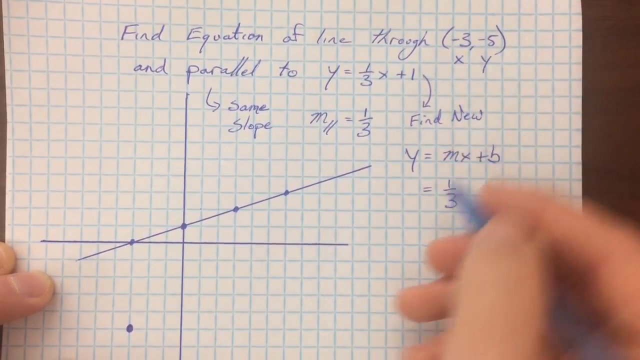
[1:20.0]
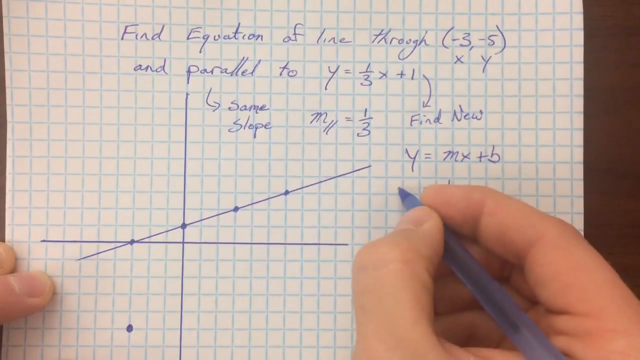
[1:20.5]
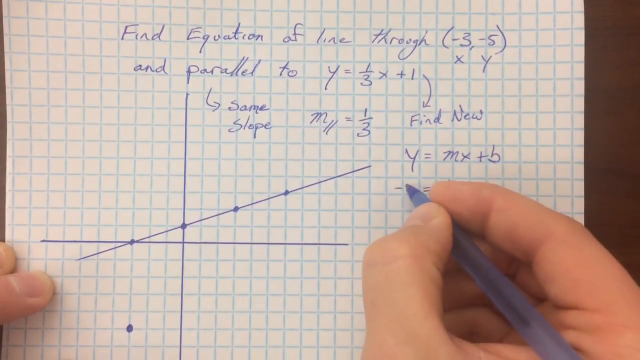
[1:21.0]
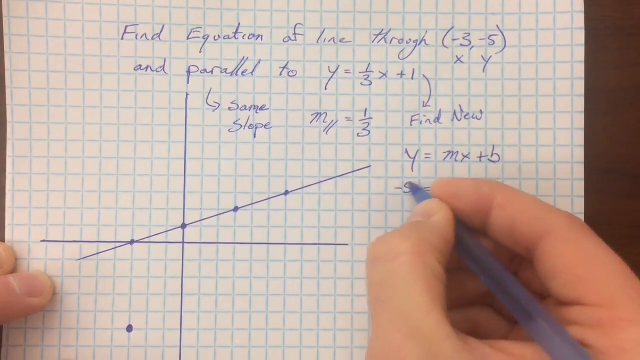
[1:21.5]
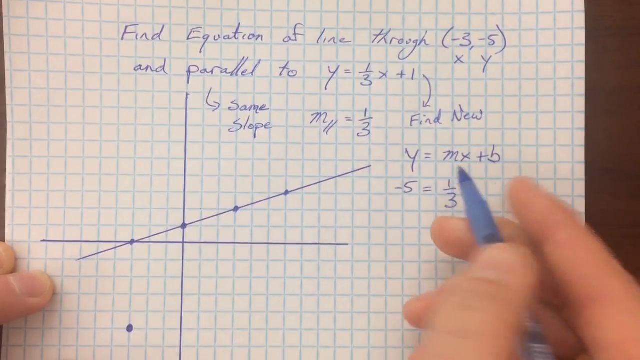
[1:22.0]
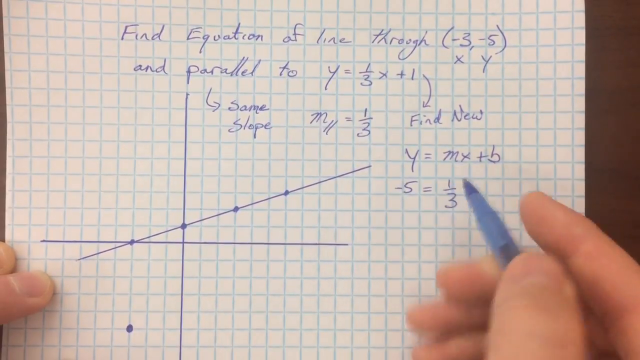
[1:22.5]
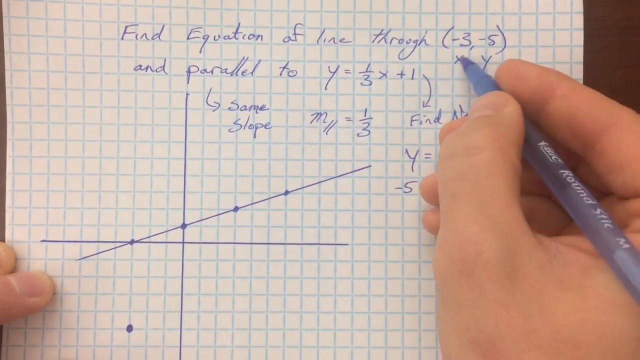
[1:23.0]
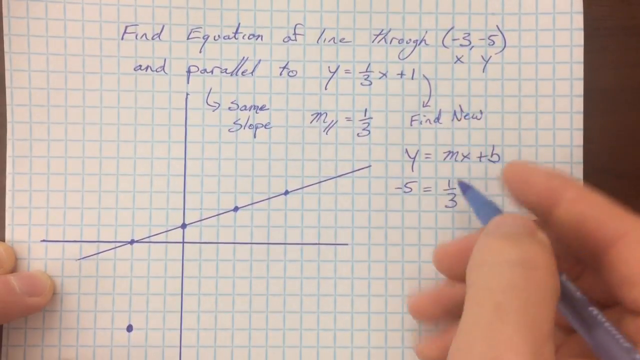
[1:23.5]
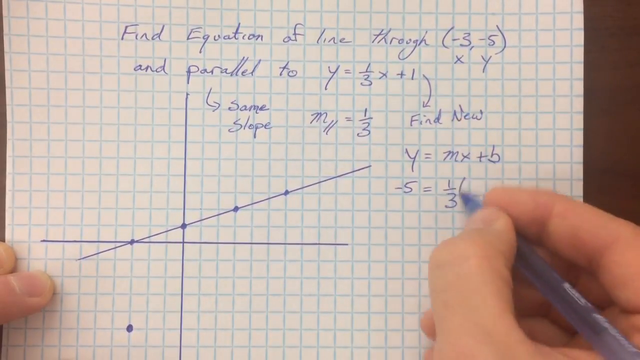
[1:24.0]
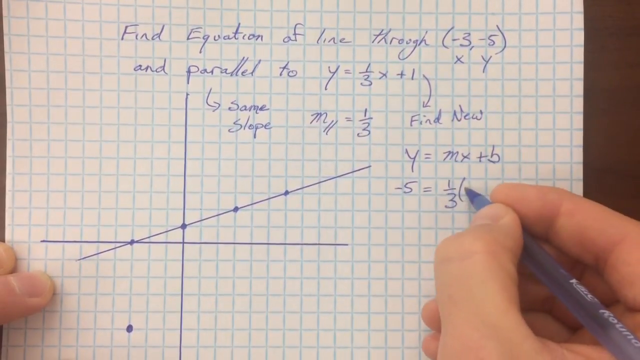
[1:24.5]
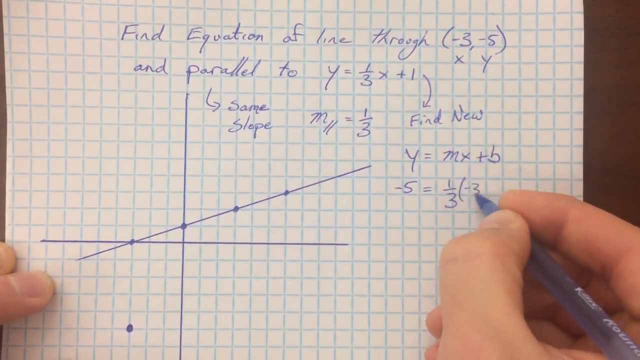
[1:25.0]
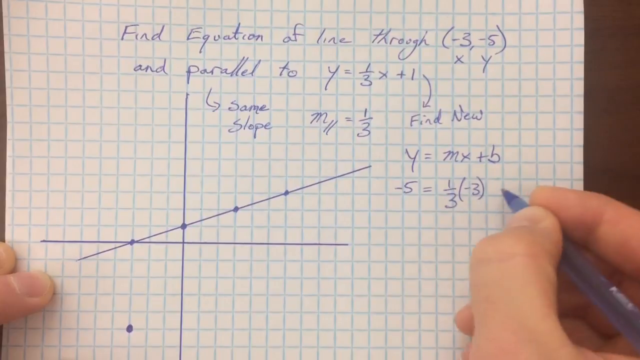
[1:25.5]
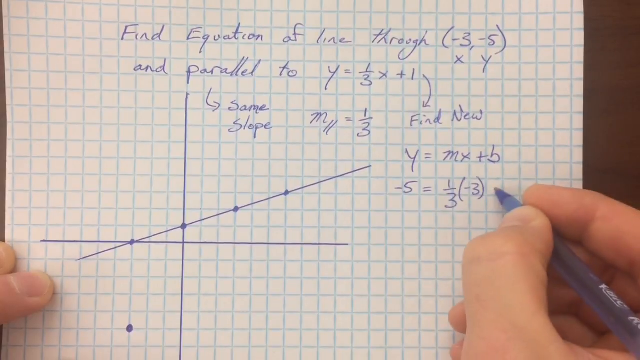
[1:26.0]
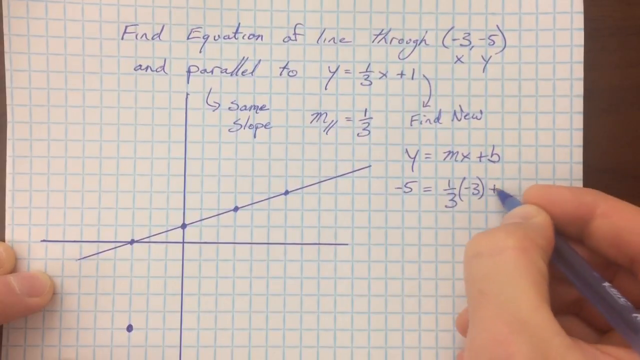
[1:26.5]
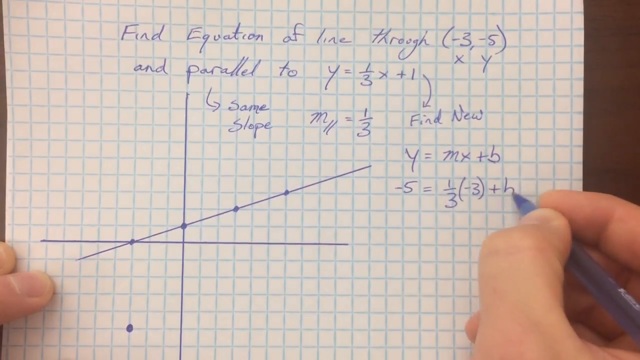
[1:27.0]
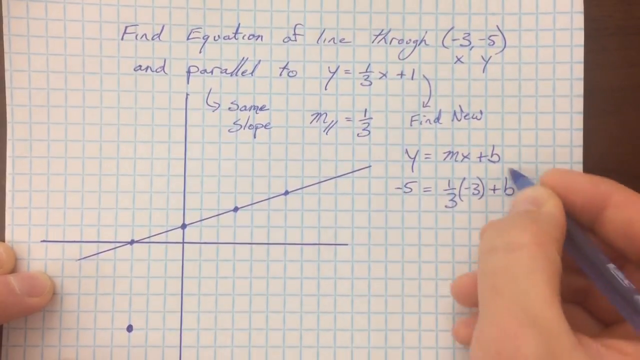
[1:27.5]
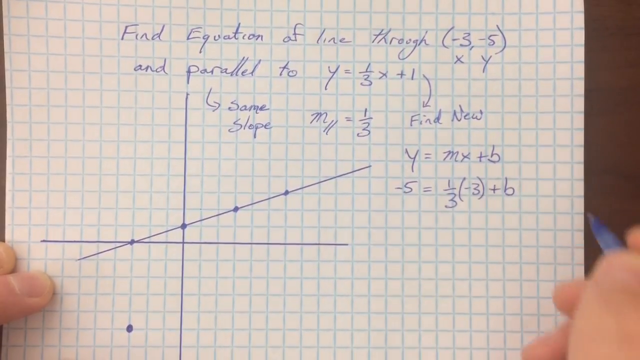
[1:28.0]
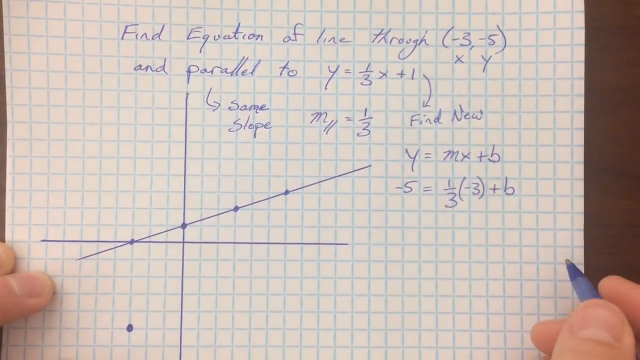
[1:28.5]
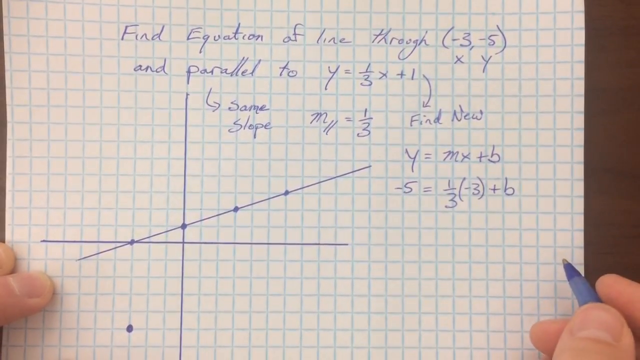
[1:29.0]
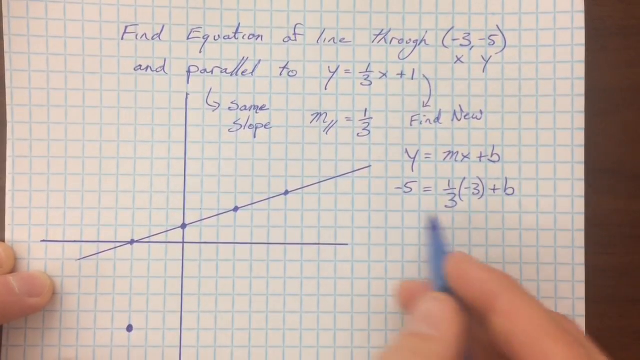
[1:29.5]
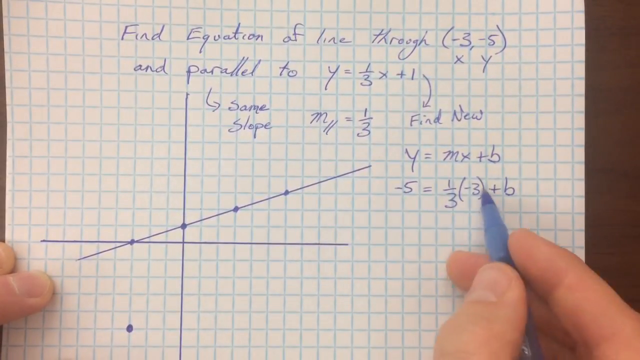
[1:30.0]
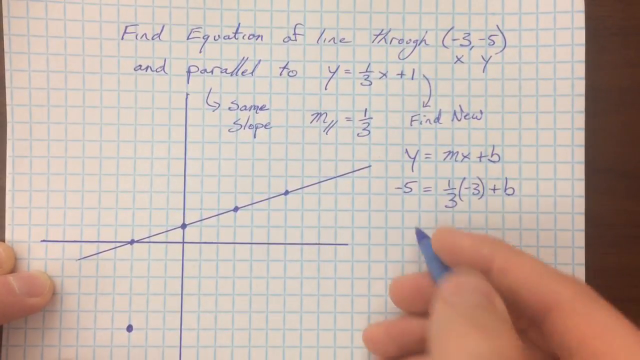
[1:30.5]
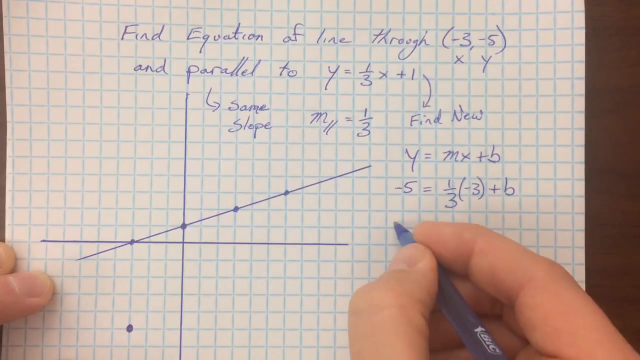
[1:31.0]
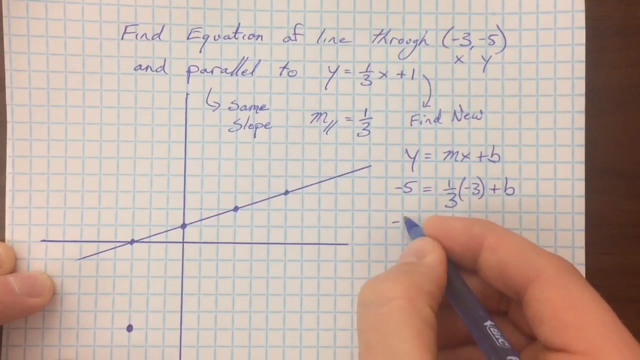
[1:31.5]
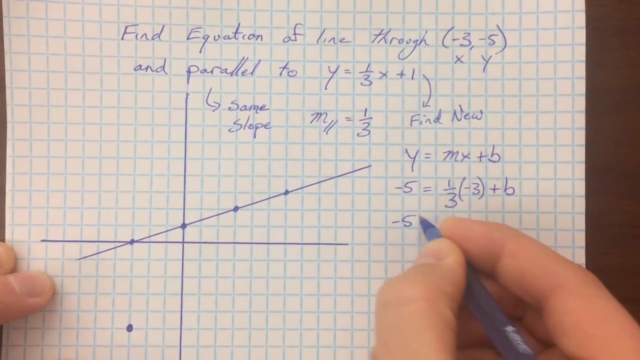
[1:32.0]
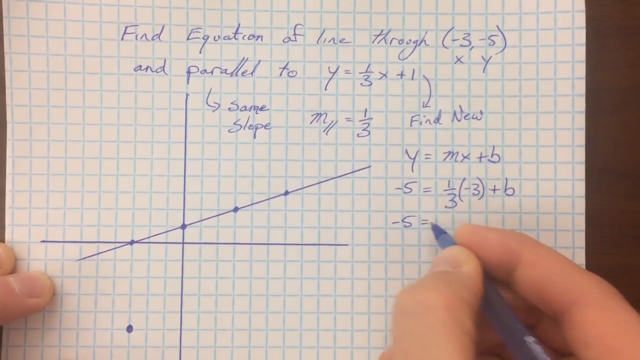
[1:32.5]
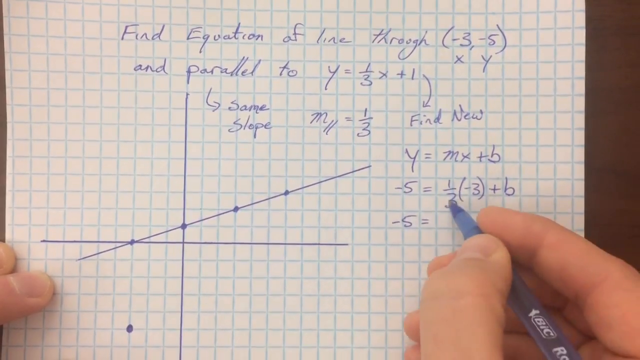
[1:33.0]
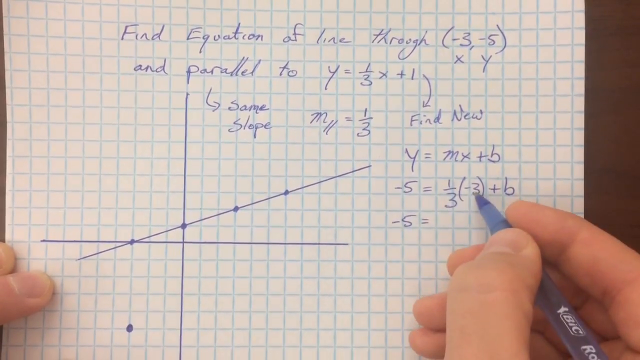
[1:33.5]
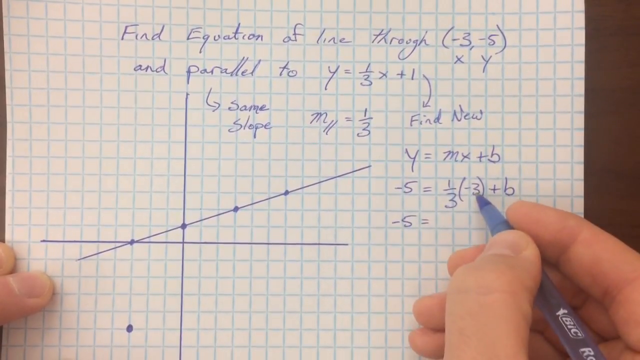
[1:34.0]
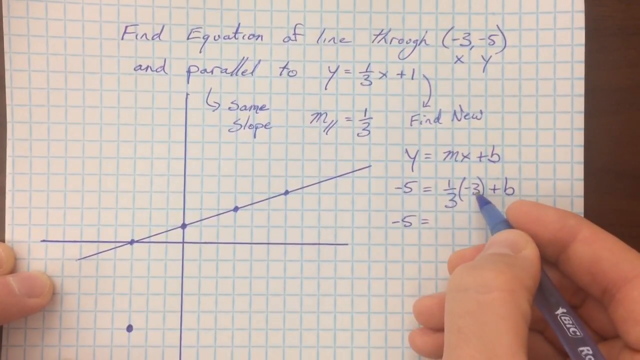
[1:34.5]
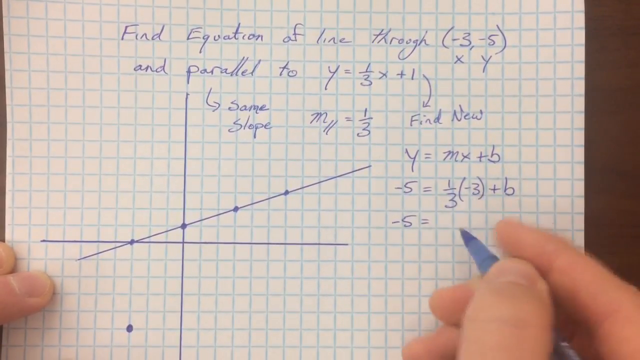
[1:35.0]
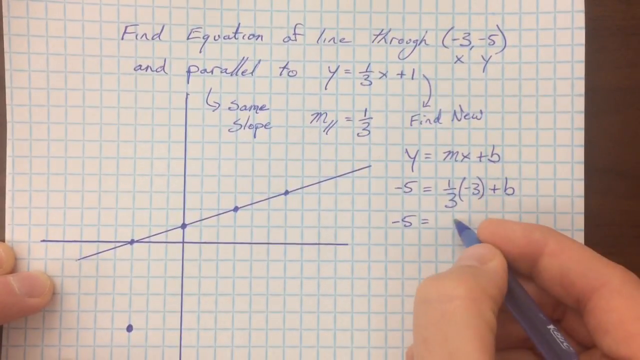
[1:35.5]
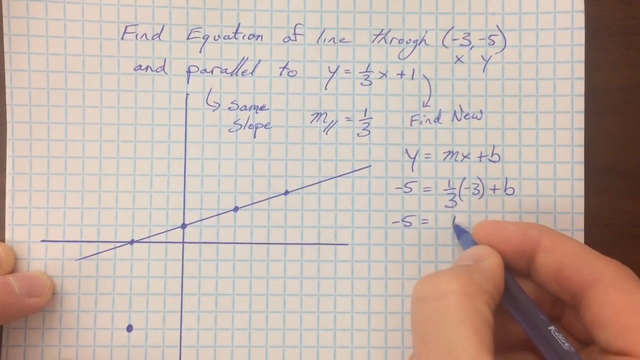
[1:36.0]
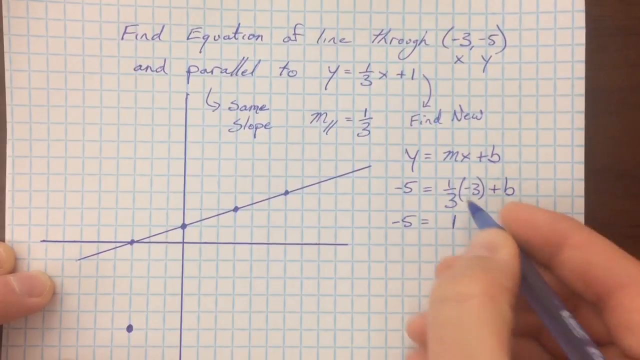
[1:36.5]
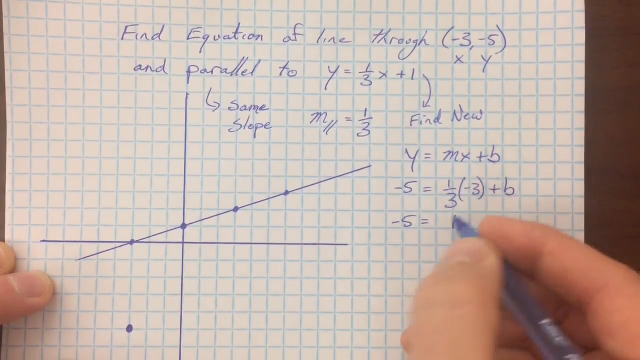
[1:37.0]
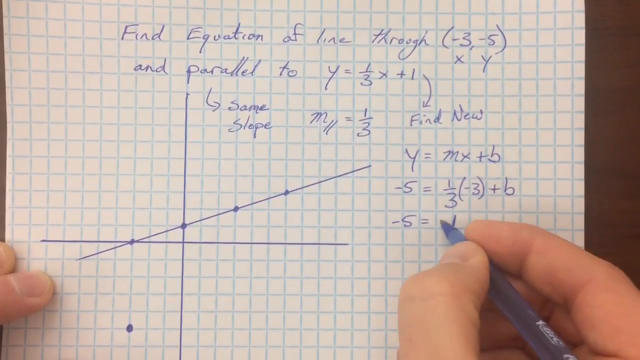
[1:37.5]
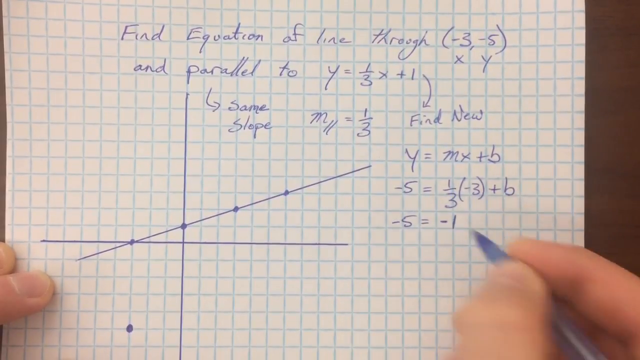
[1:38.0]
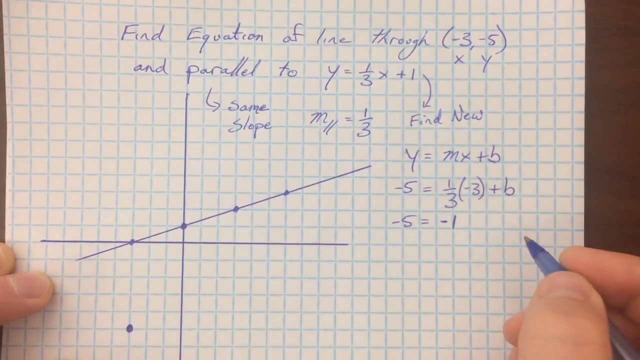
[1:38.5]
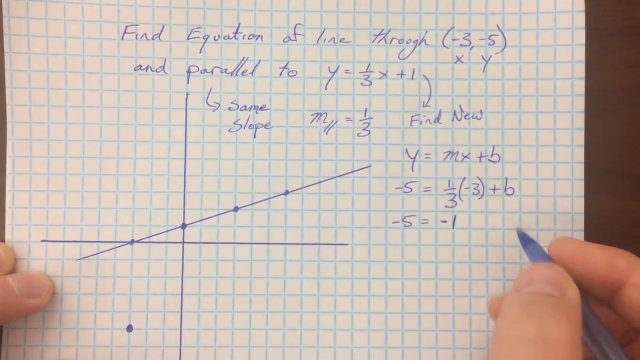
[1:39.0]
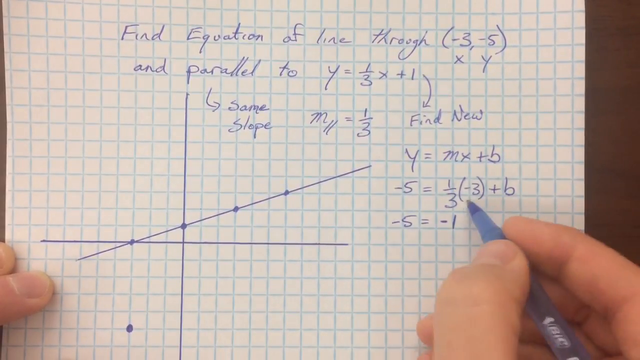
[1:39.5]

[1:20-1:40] The man writes a new equation built from the old one and the coordinates, using x = -3 and y = -5. Starting from y = mx + b, he replaces y with -5, m with the slope 1/3, multiplies 1/3 by -3 as x, and adds plus b. He begins solving, and the equation becomes -5 equals -1, with him writing out the results.